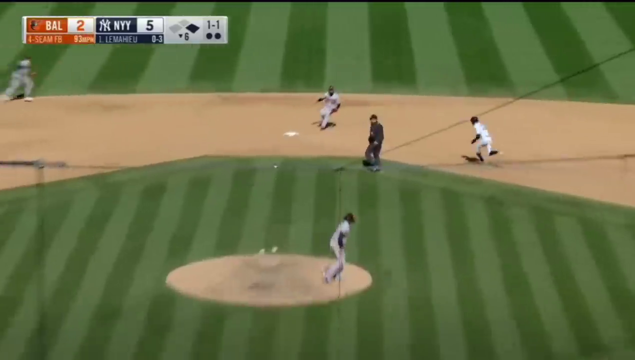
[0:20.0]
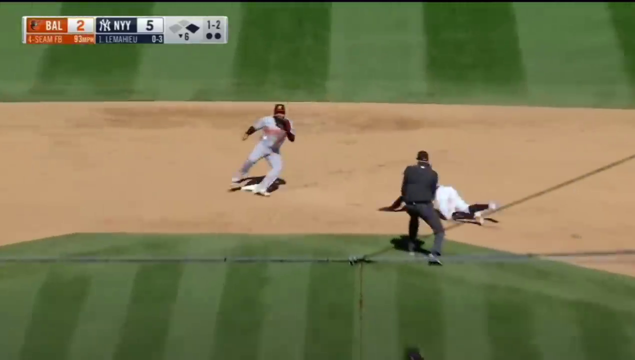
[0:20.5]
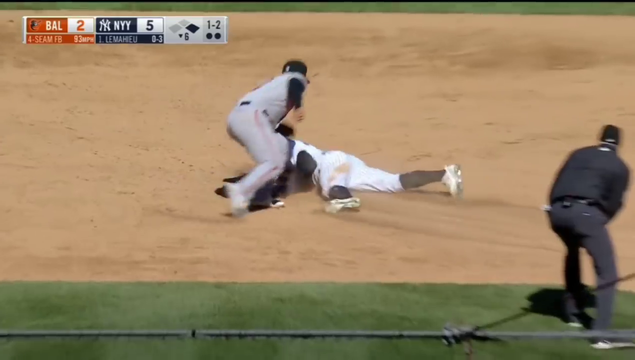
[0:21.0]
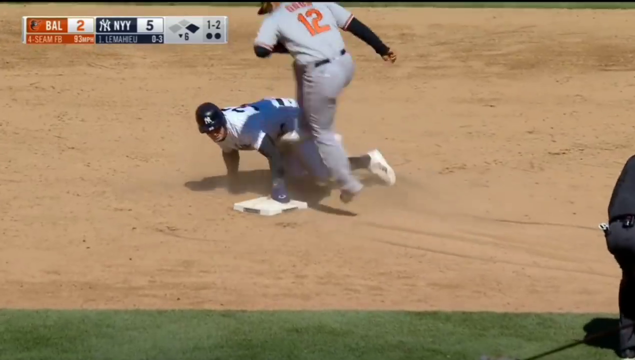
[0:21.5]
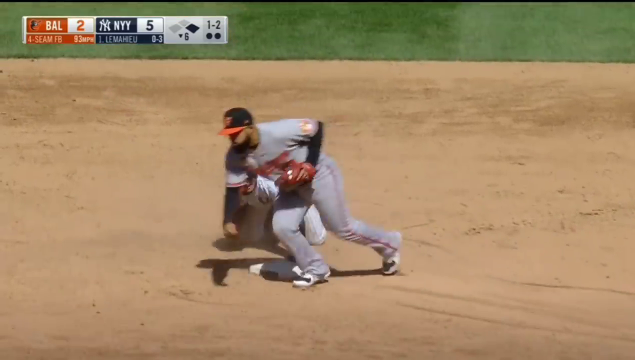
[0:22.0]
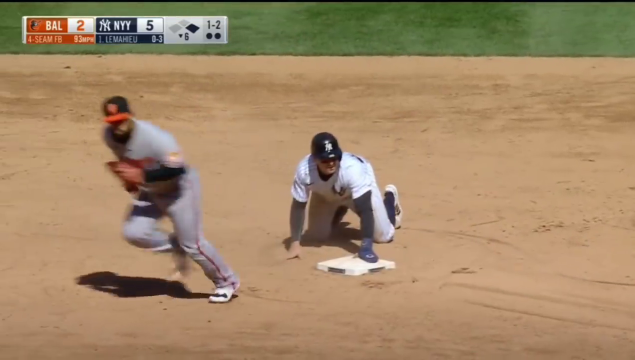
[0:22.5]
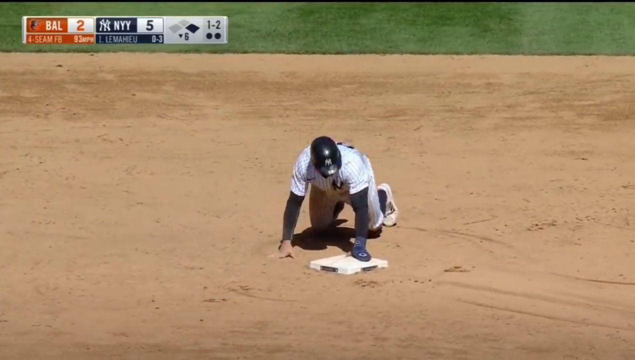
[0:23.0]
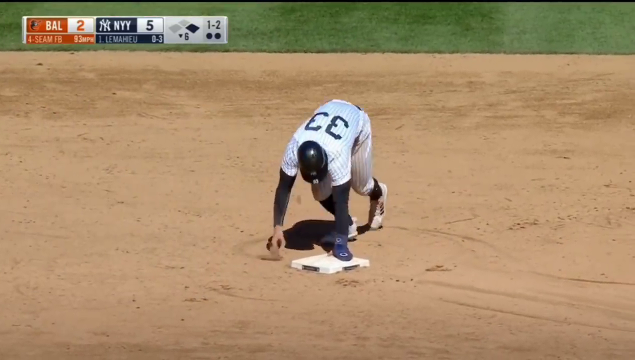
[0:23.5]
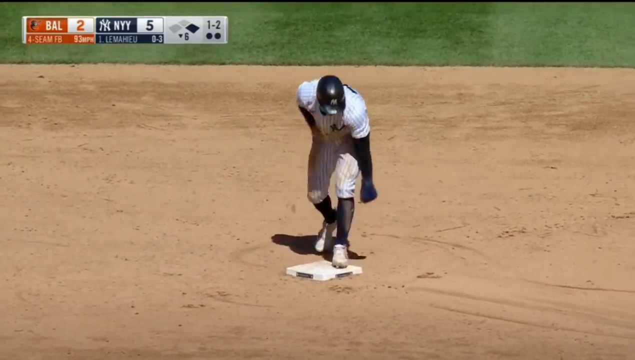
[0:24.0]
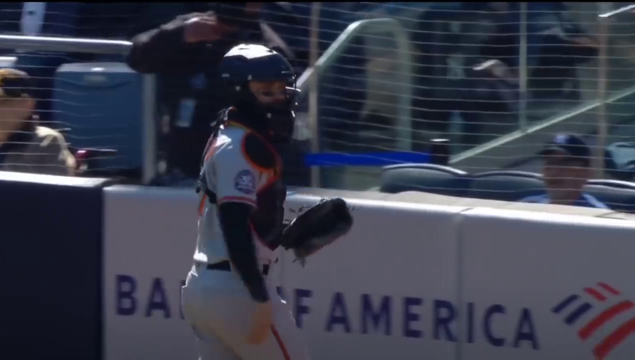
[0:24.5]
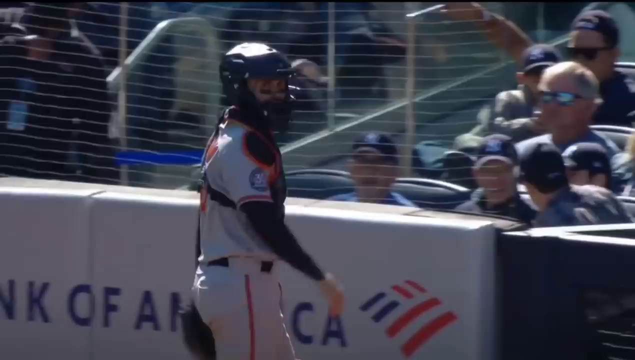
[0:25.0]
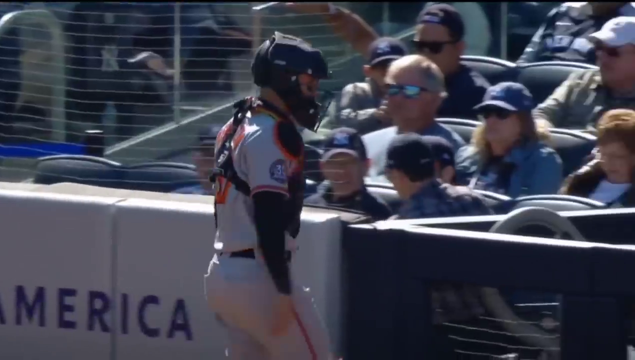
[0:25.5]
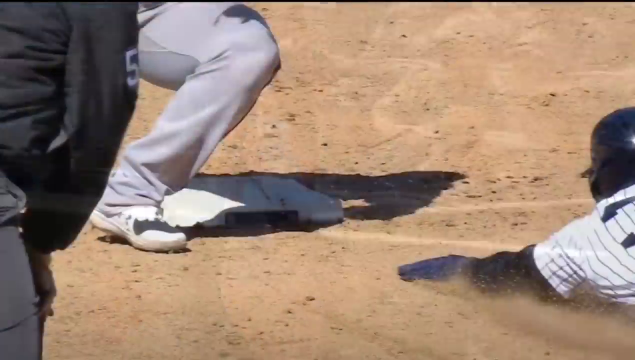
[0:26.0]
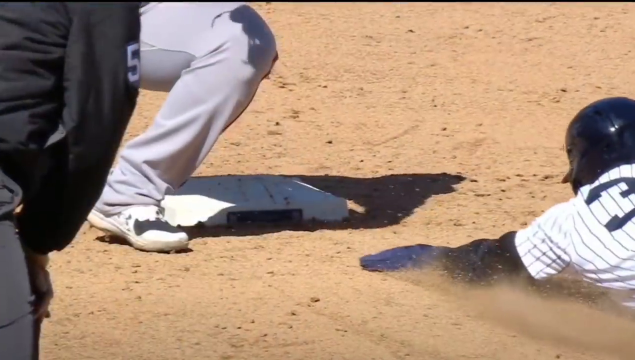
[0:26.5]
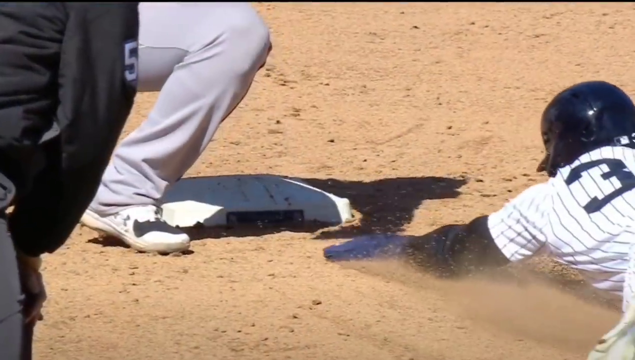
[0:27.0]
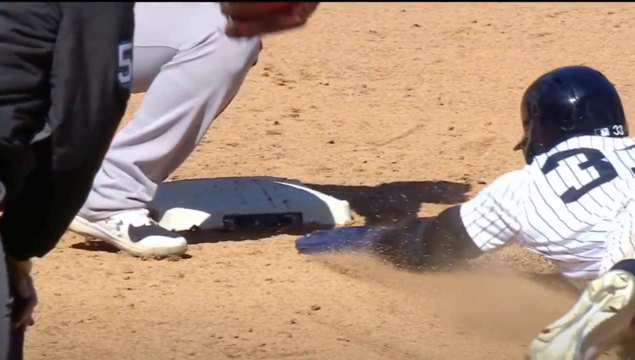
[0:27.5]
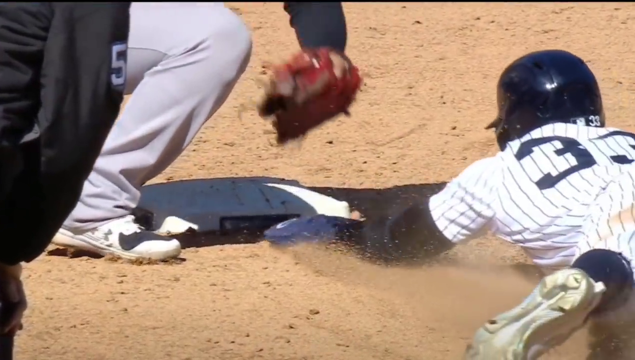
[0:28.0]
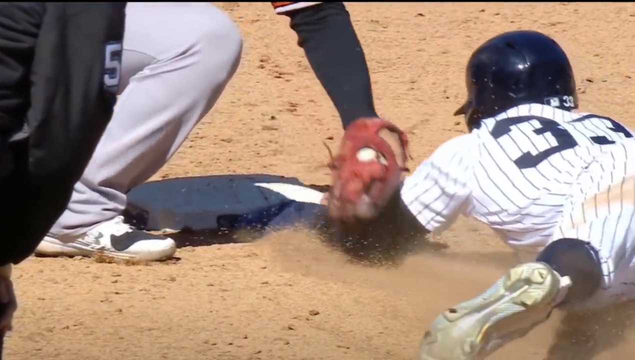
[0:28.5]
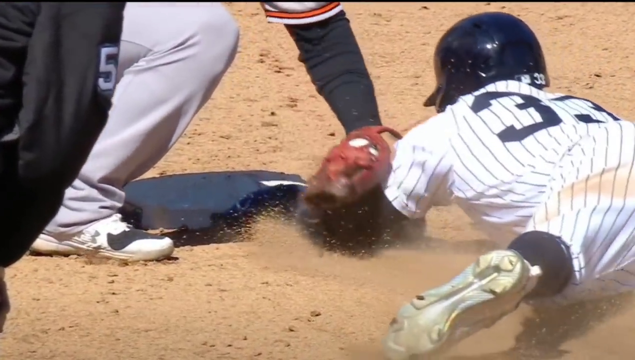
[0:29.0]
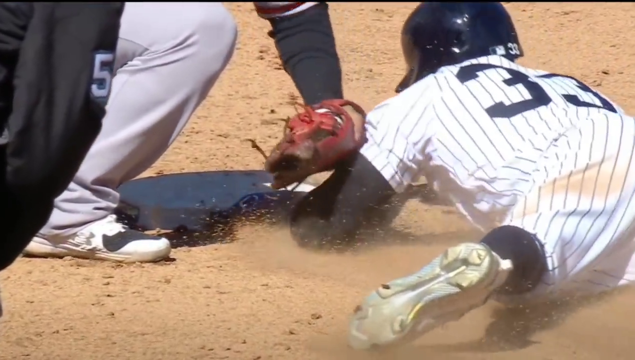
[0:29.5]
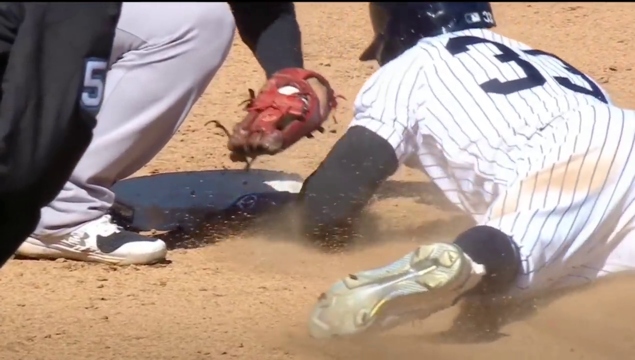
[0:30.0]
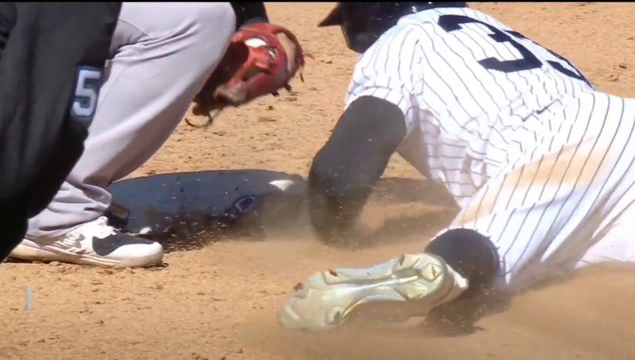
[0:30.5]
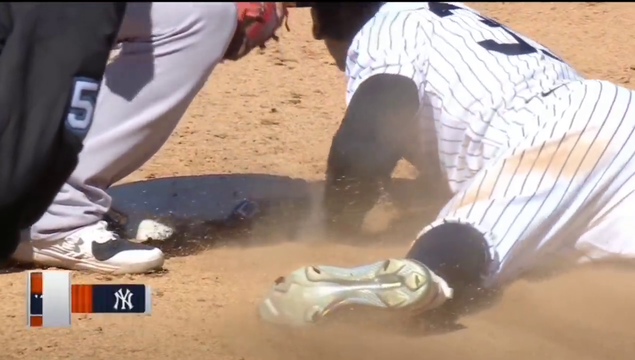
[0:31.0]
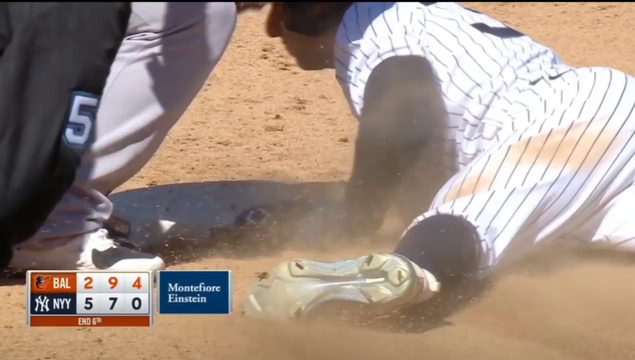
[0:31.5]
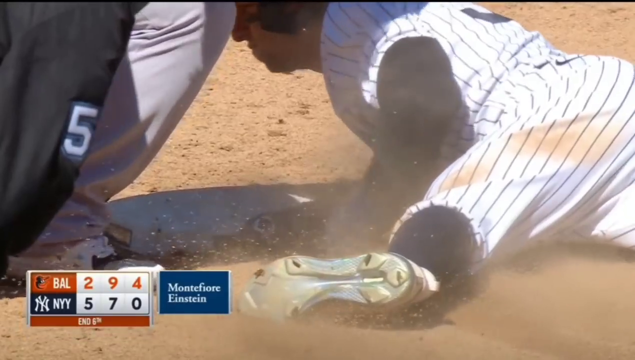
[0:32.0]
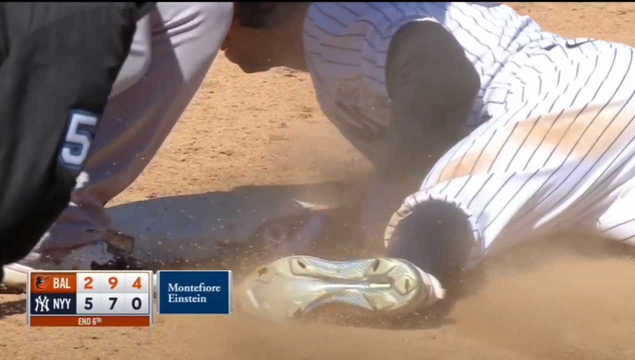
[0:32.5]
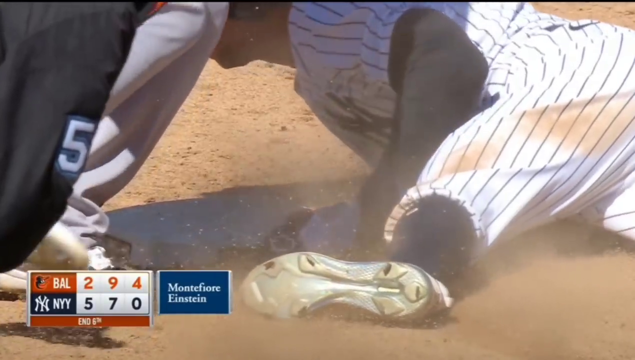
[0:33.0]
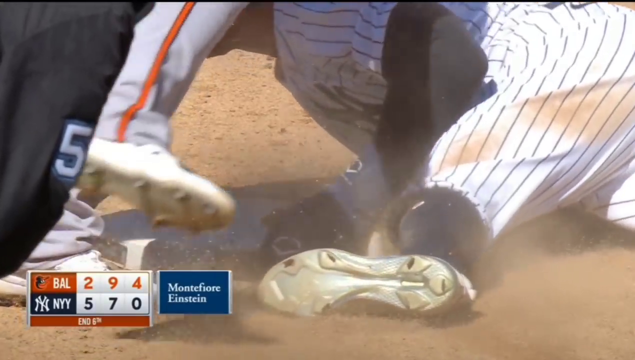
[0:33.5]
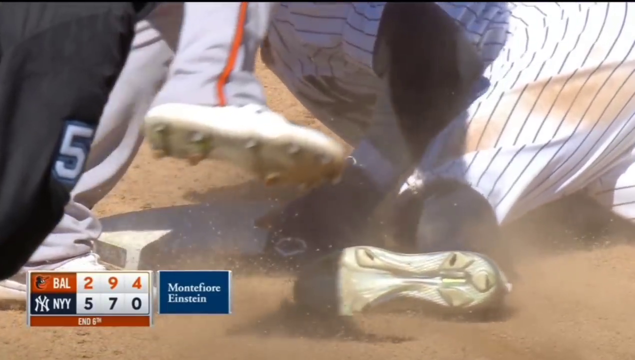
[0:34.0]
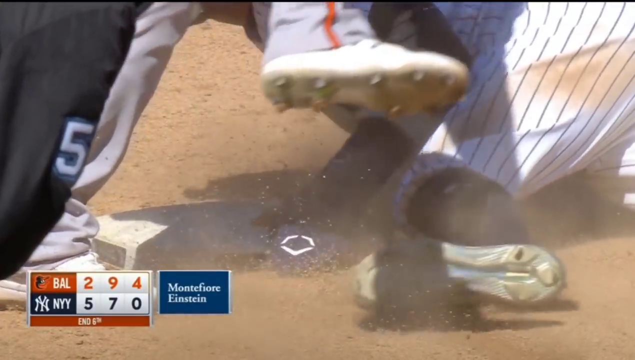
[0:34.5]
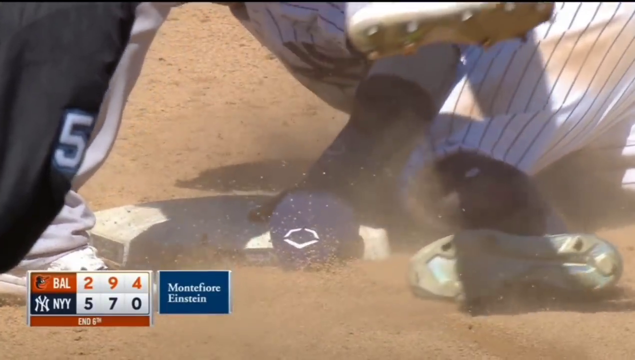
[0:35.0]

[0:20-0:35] One of the Baltimore players tries to tag a Yankees player who is running to a base. The Yankees player slides and hits the base before the Baltimore player can do anything. The sliding player uses a glove and wears a helmet. The baseball players have black lines under their eyes. A slowed-down replay of the play shows the Yankees player touching the base before the other player can touch him, with dirt flying from the impact of the players. The full score is displayed with all of the innings scores so far, and a small logo appears that says "Montefiore Einstein."